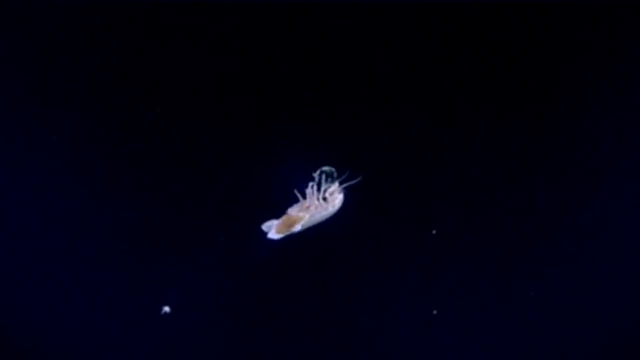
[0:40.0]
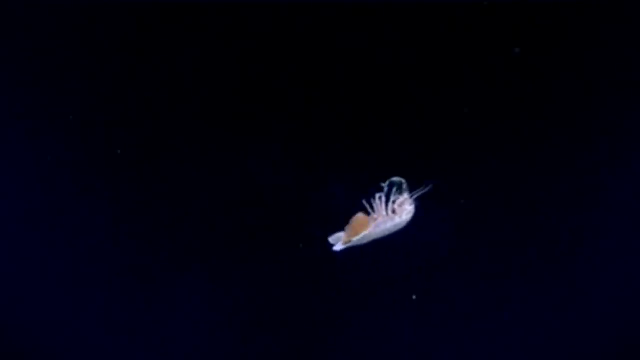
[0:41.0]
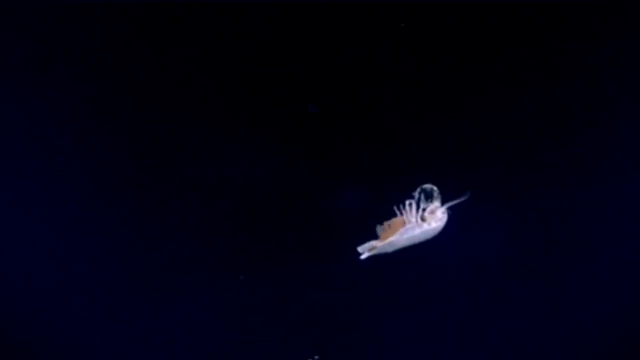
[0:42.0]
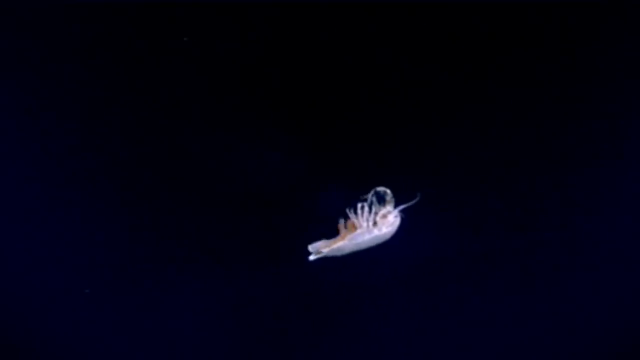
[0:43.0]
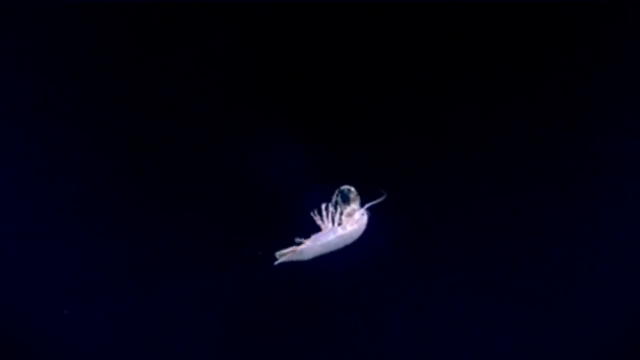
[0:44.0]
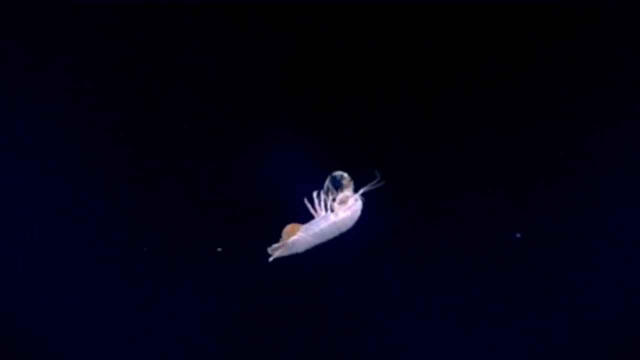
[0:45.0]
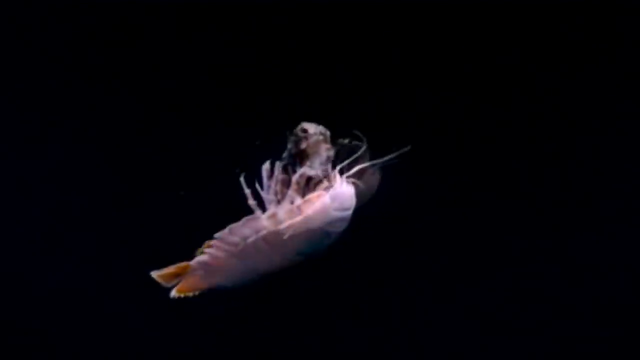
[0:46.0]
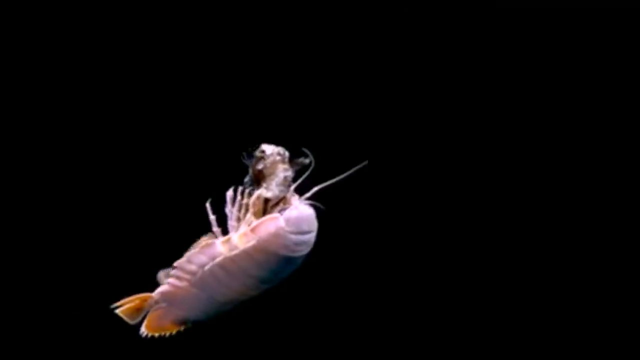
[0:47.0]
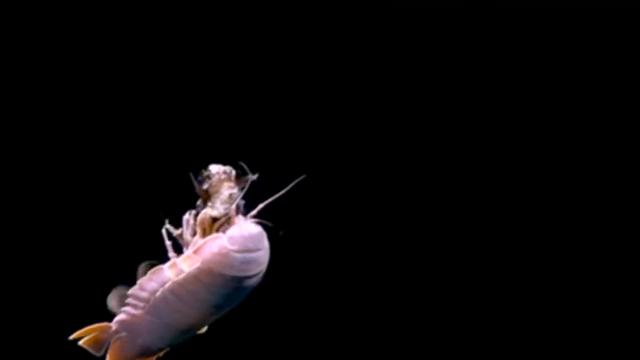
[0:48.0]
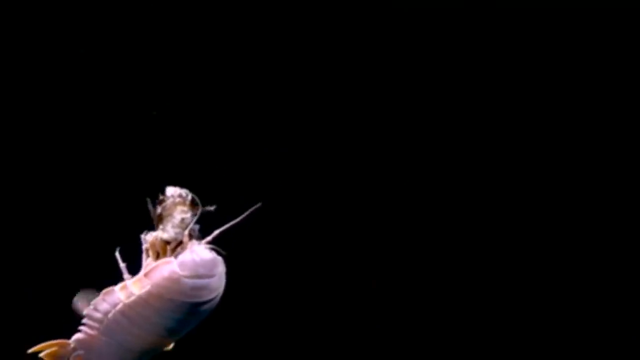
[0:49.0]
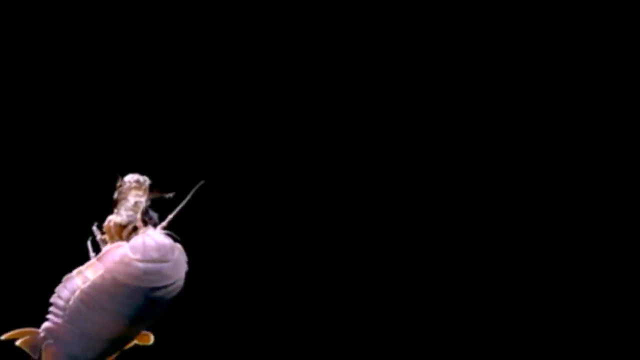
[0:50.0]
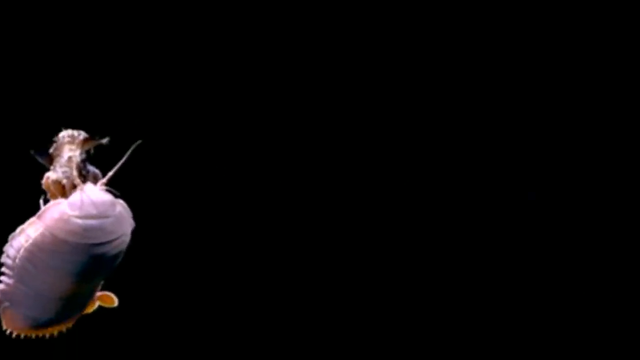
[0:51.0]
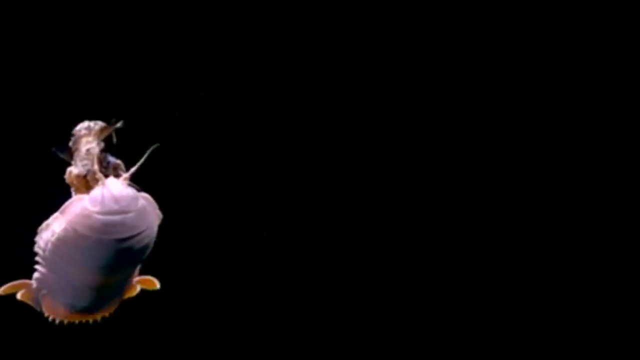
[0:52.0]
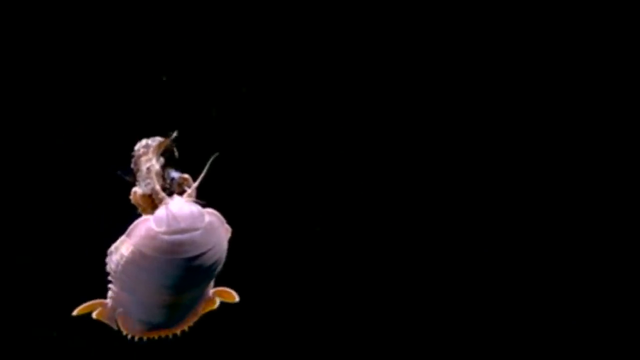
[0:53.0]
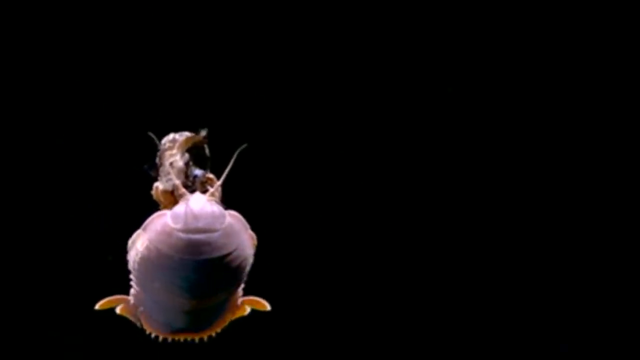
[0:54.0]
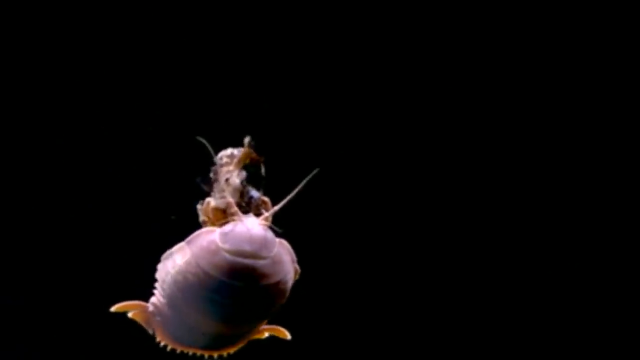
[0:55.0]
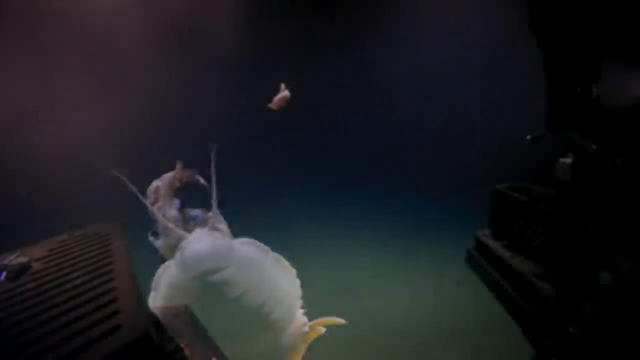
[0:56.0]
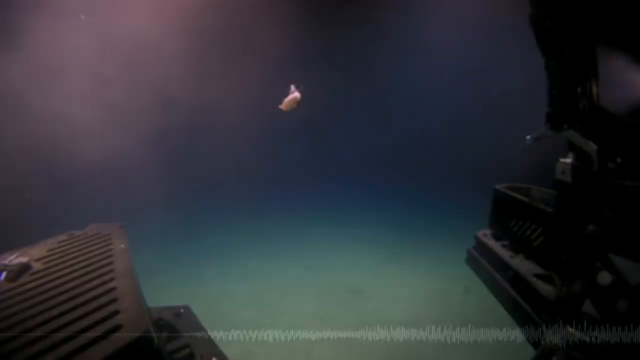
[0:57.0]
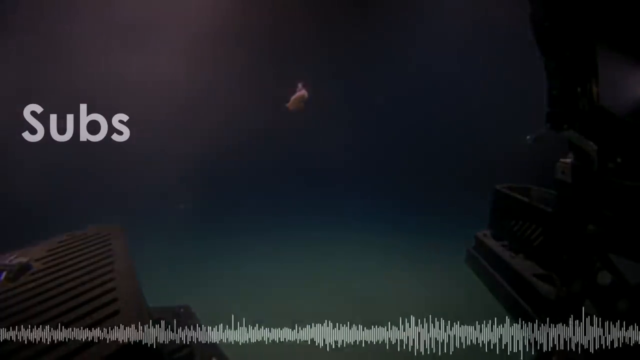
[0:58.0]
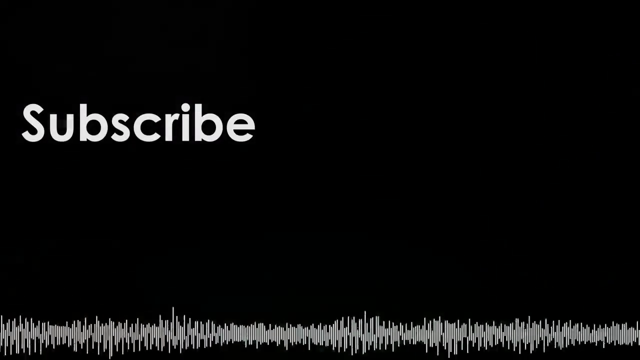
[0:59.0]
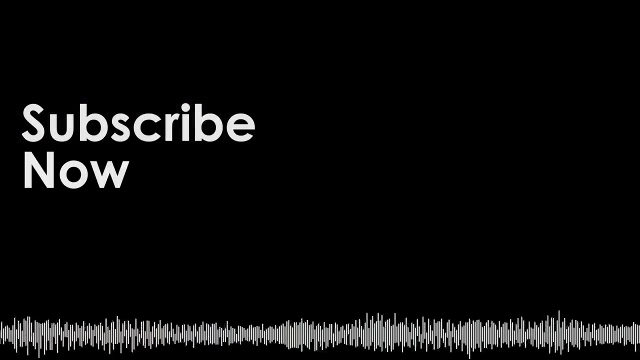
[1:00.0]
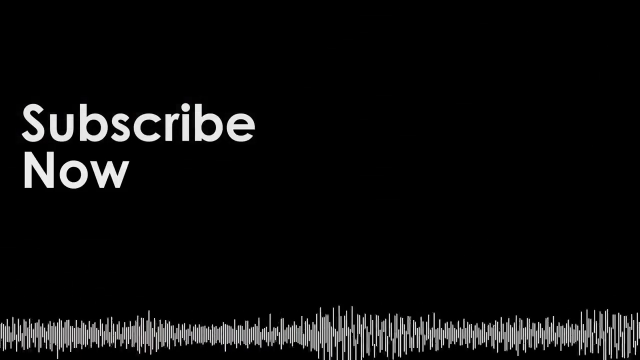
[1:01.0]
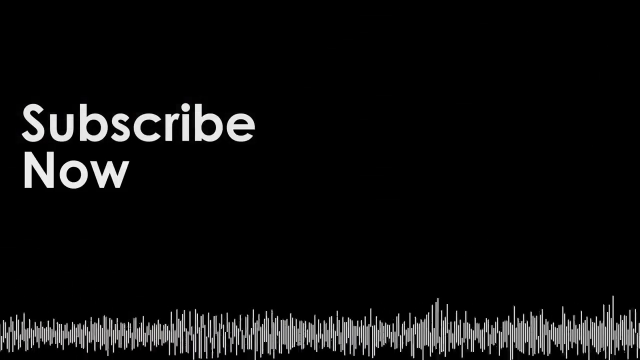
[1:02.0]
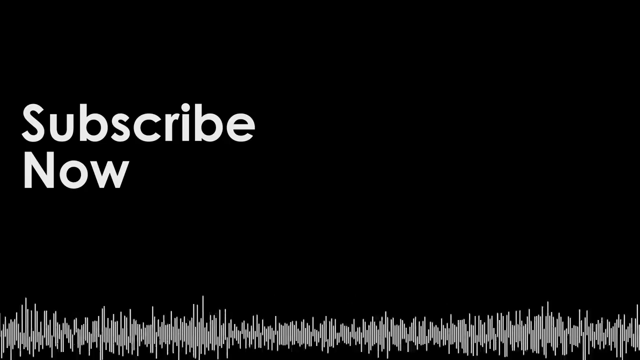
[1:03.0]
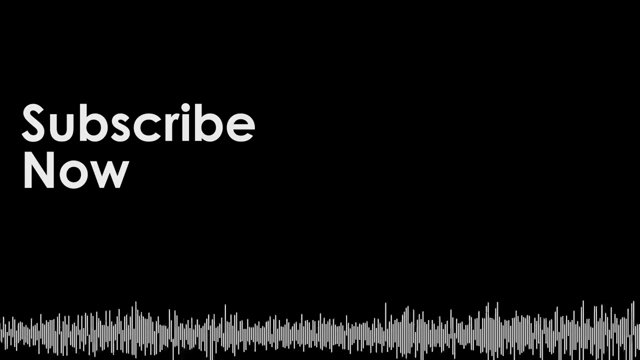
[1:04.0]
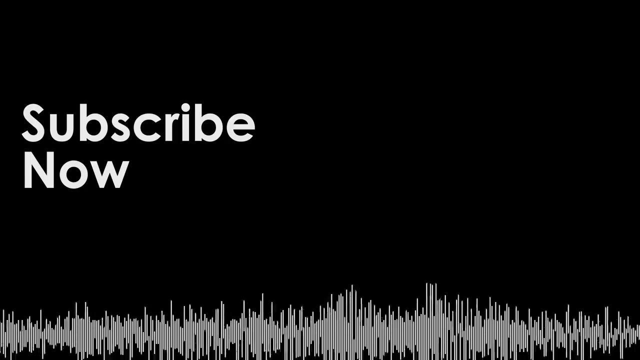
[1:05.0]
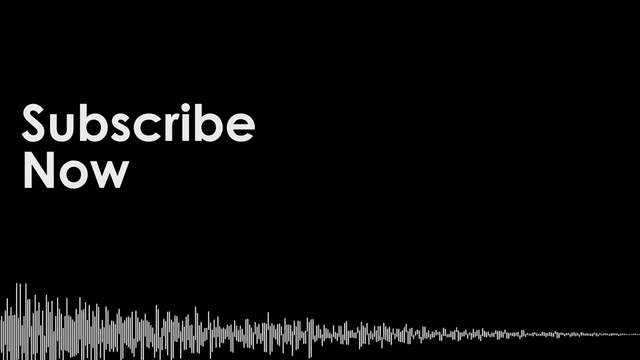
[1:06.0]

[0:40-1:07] The sea creature gently propels itself through the sea, set against the dark background and looking to glow in the camera light. A fluttery section near the underbelly, near the tail, propels it along. It has two front tentacles and two eyes, and may be carrying something in its front legs. It moves along on its back, the fluttering beige flaps giving propulsion, its front legs up, seemingly holding something. A close-up shows the segments on the back shell, with smaller segments to each side of the body, and the tail has sharp segments attached to it. As it turns to face the camera on its back, it does look to have some food. Then the screen goes black and a subtitle appears that says "subscribe now". At the bottom of the screen is a pale line that looks like a radio signal or something similar, which intensifies and then disappears to a single line.